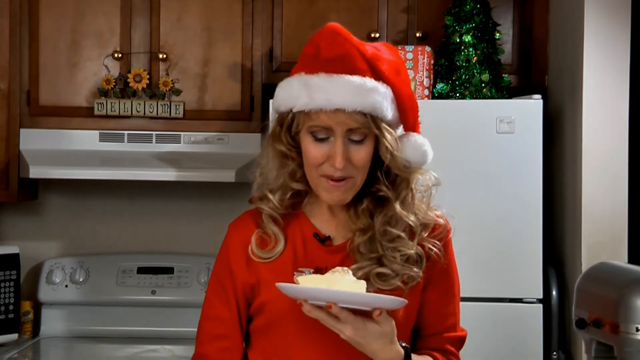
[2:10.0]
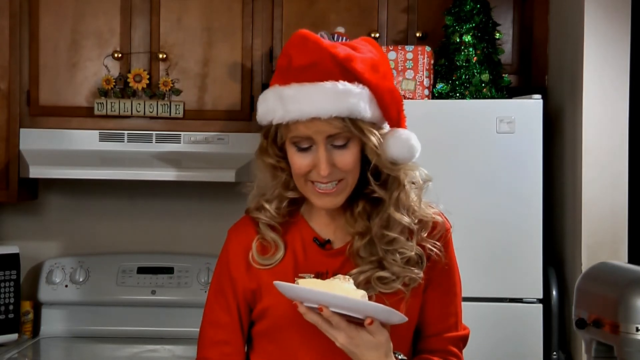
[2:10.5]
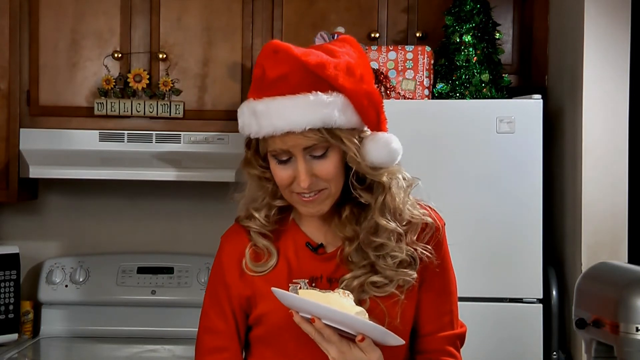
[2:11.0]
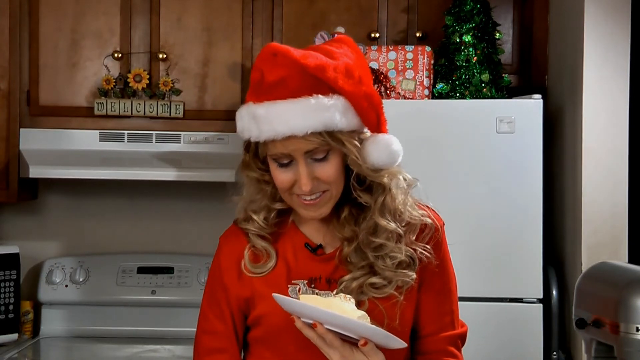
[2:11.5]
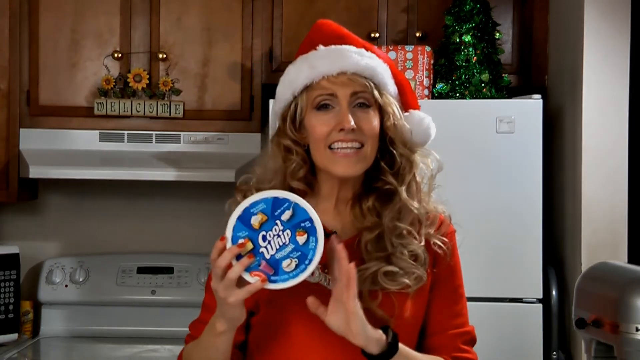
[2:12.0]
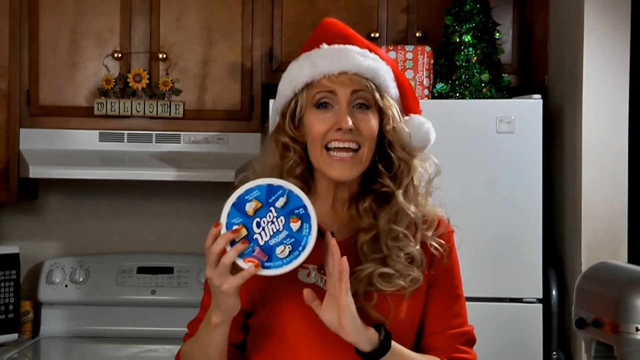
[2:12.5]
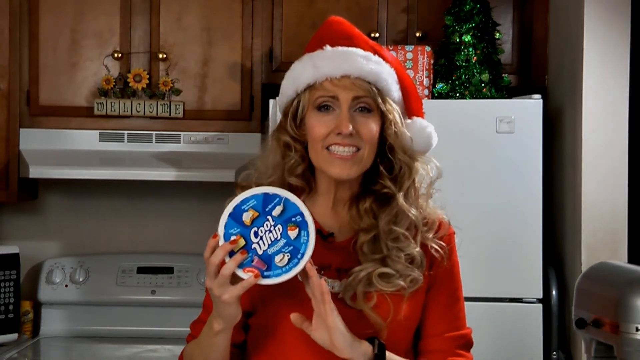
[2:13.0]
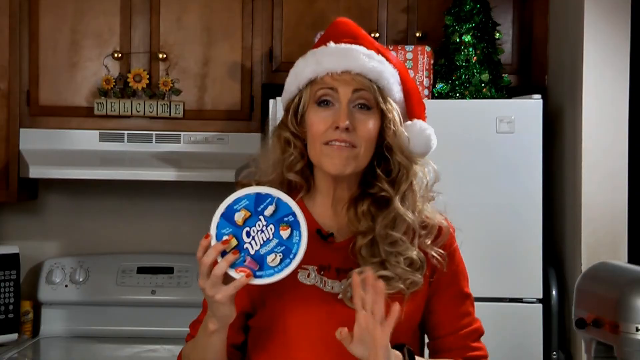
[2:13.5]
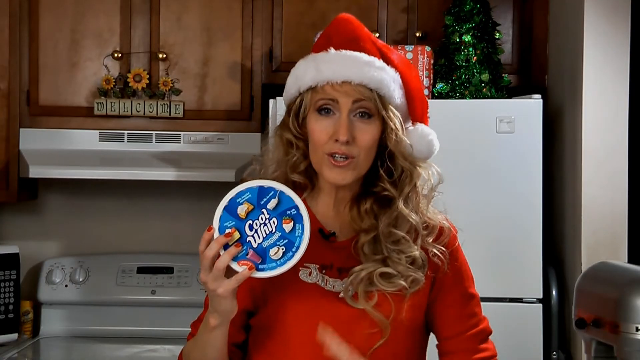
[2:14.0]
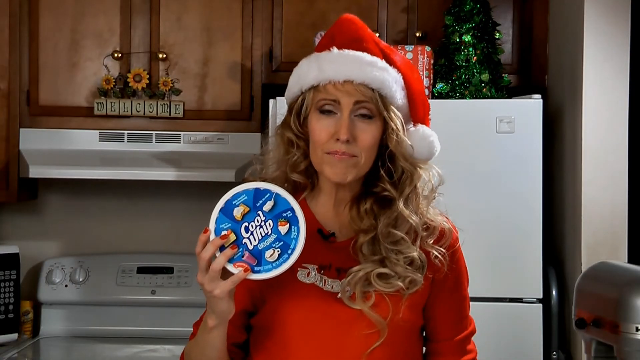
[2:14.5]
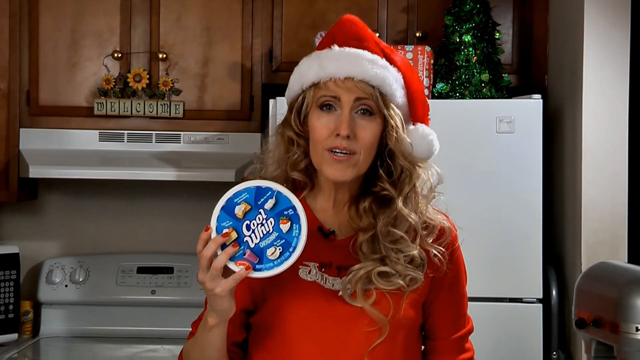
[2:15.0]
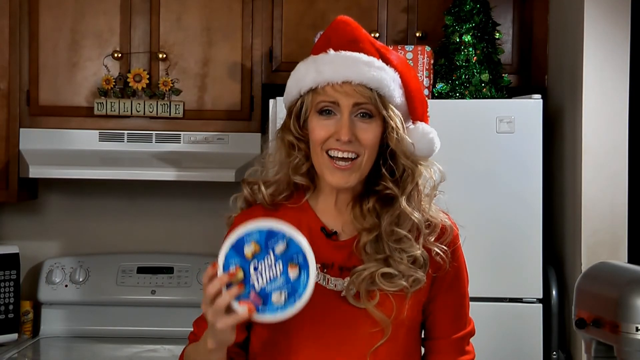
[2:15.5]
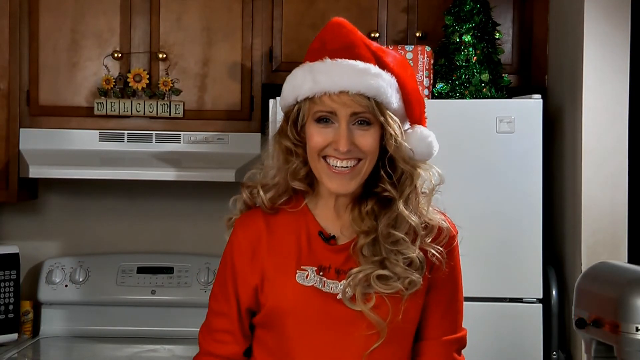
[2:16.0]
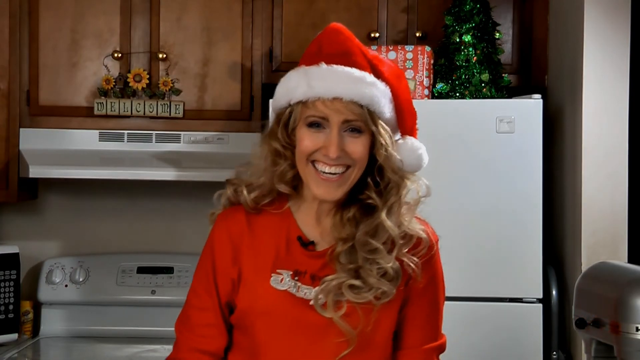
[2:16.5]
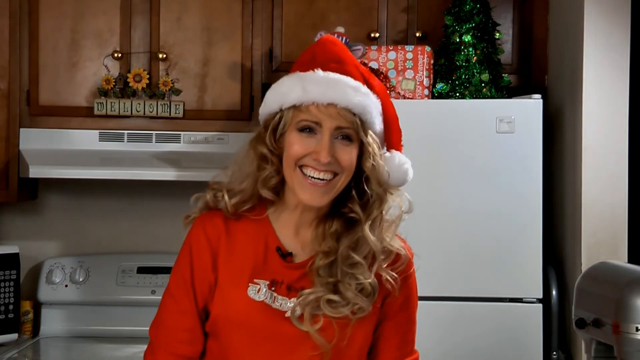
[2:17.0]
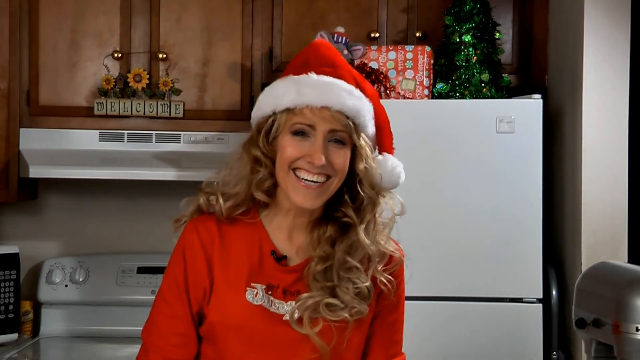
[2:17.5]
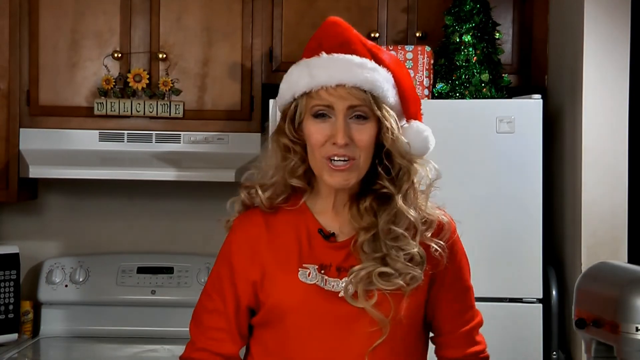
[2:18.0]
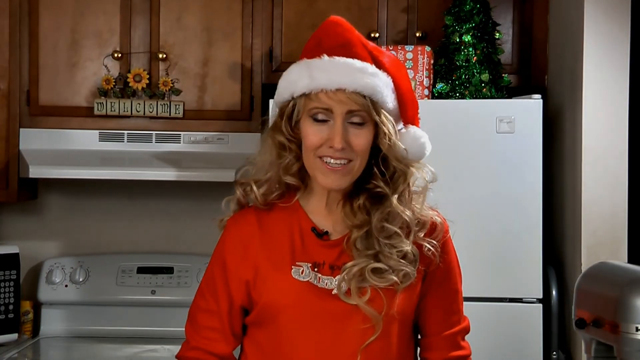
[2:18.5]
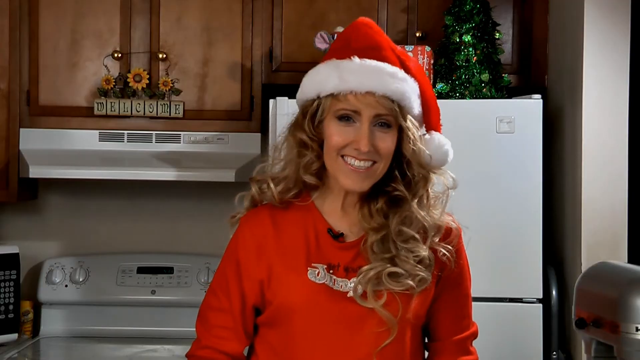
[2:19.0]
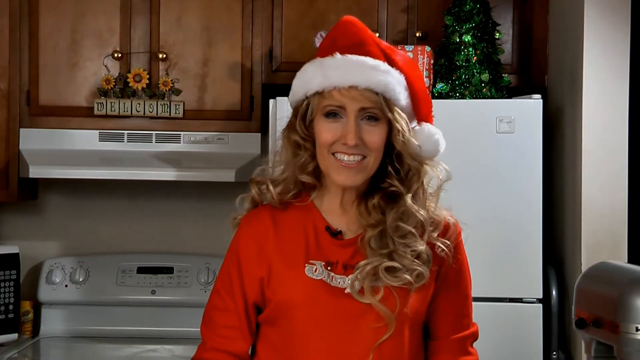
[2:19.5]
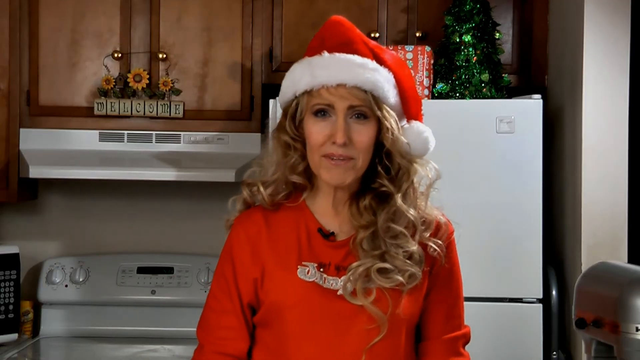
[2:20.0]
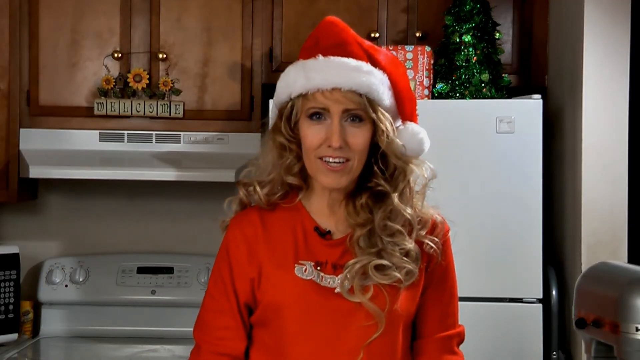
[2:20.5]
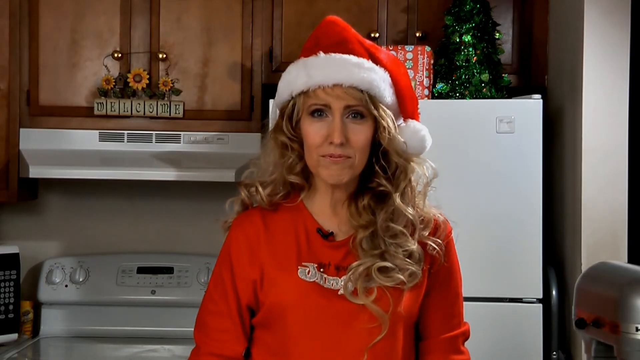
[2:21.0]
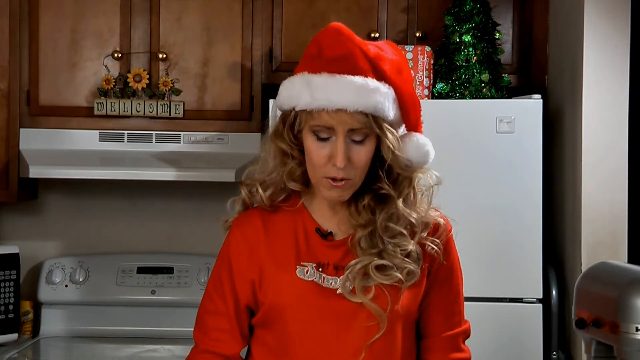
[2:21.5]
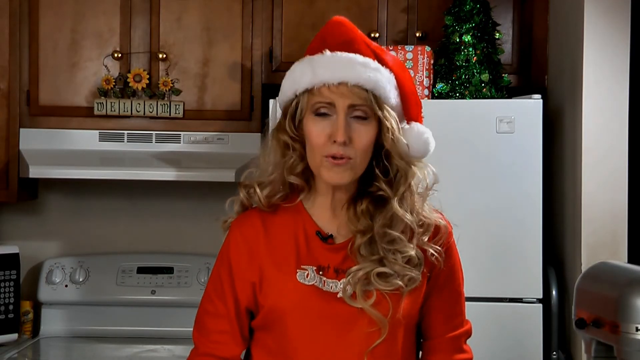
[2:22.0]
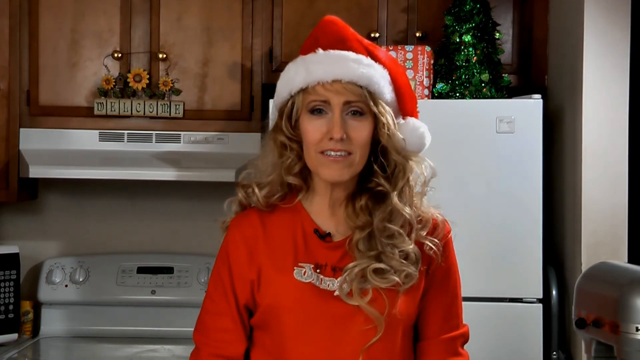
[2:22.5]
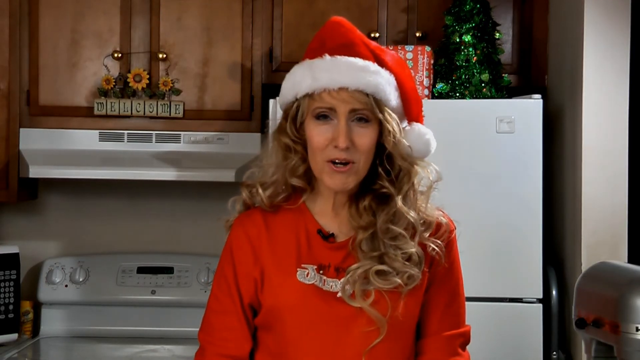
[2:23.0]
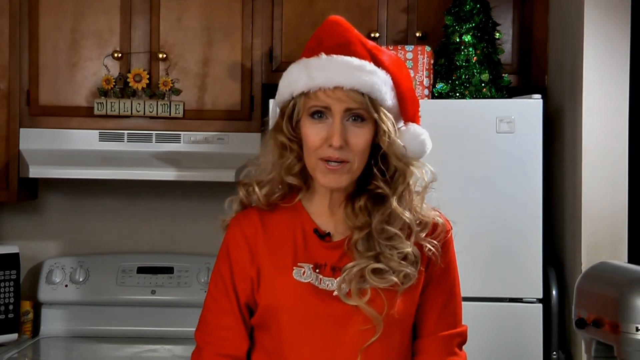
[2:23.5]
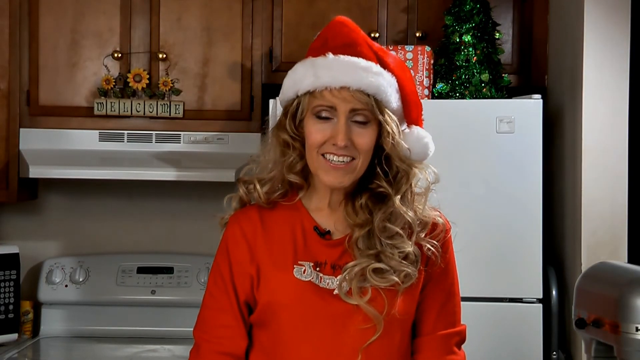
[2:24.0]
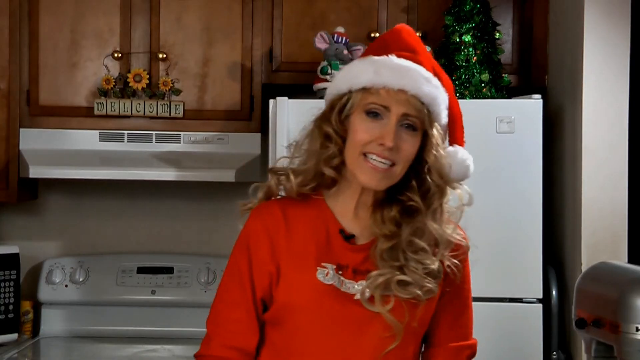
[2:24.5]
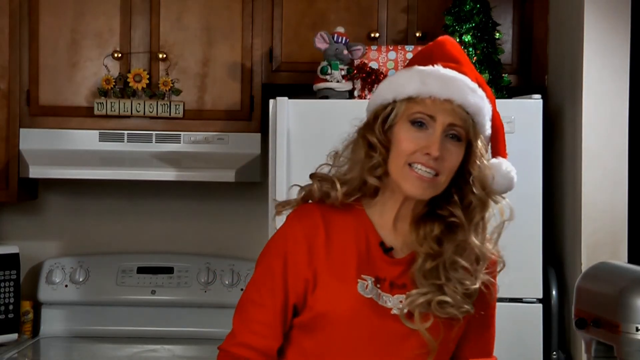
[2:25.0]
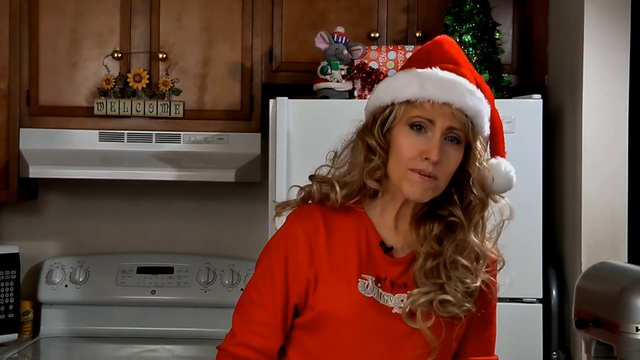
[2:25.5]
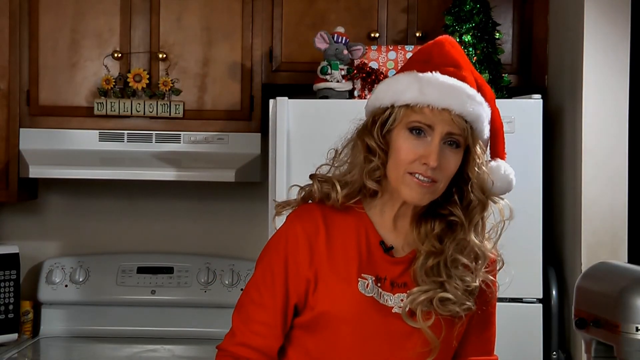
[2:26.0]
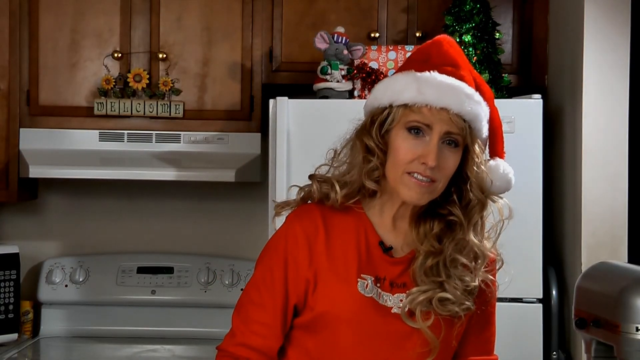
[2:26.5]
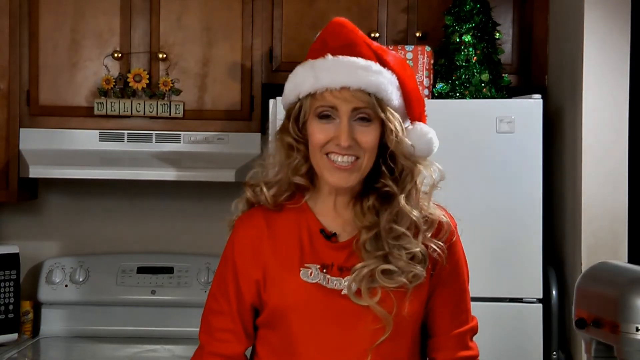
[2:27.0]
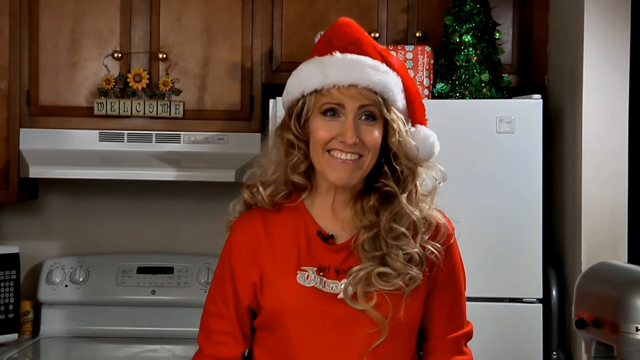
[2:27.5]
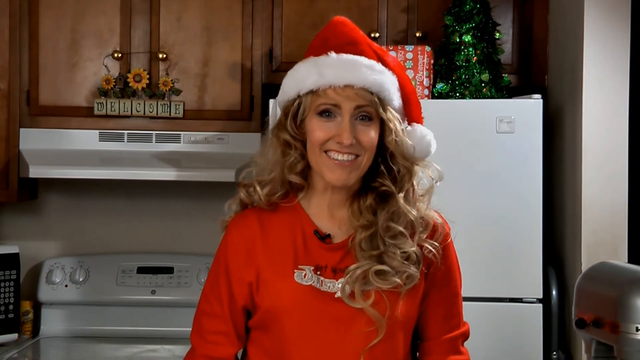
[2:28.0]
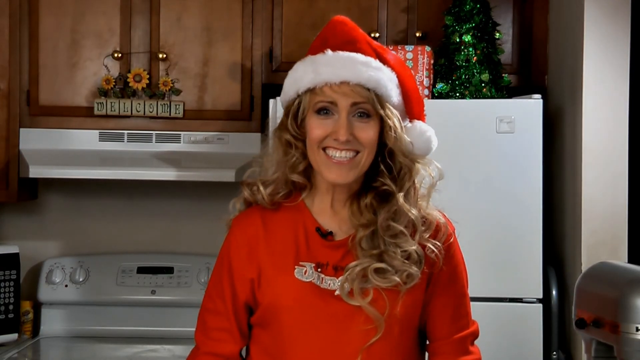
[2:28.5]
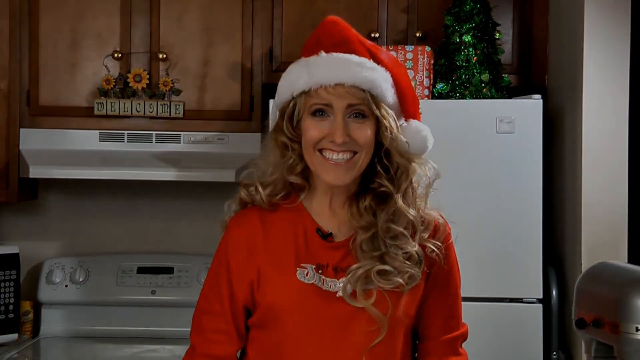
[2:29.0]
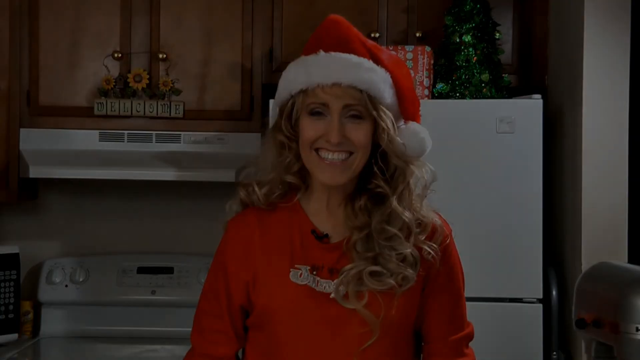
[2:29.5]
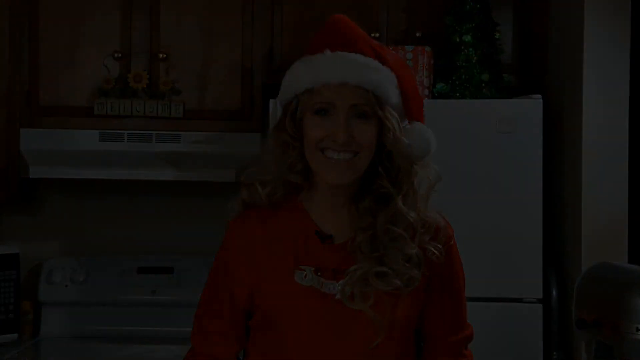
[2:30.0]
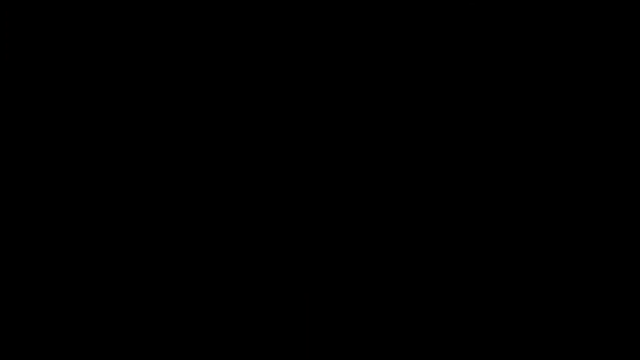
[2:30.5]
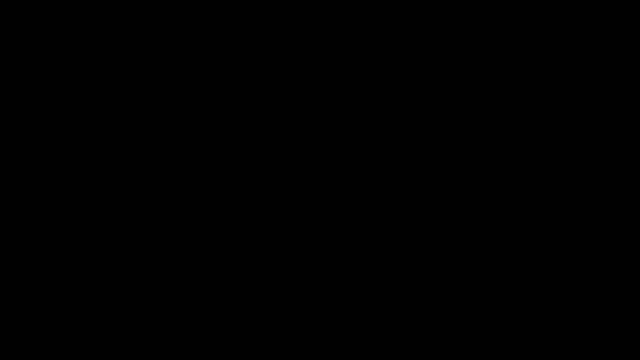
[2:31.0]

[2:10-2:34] The woman holds the pie and looks down at it while talking. The video cuts to her holding the Cool Whip in her right hand while gesturing with her left hand; she puts the Cool Whip down out of view and starts laughing. Another transition shows her talking and moving her head to the right, then it skips to another shot of her talking before the video fades to black.